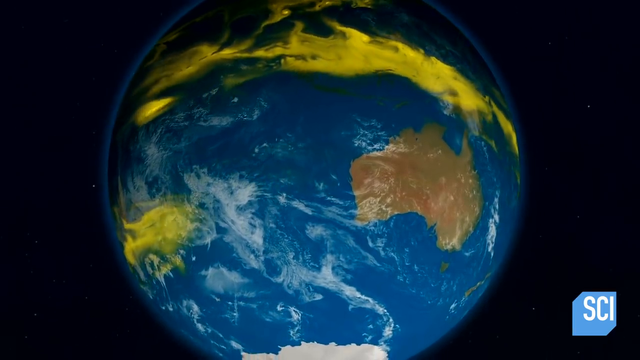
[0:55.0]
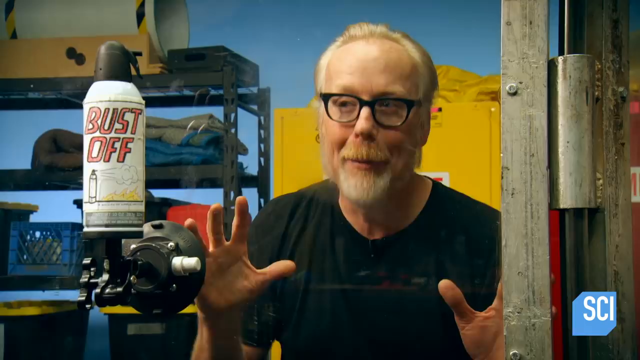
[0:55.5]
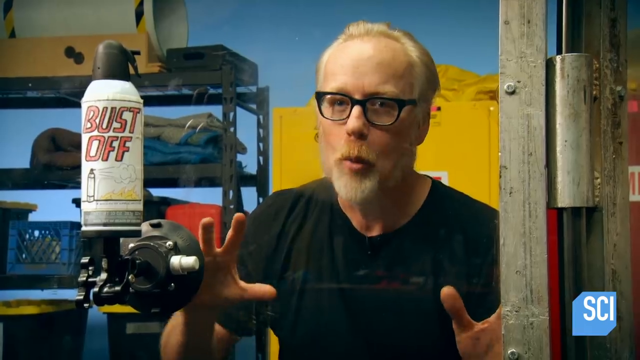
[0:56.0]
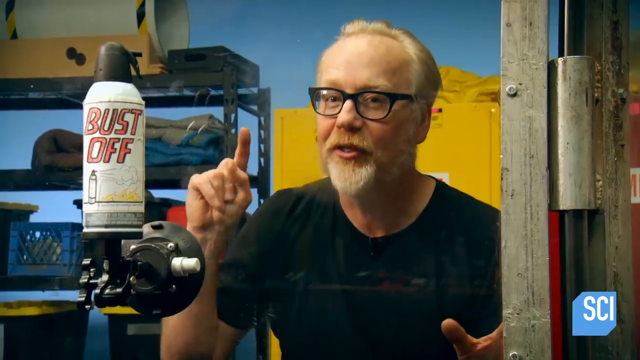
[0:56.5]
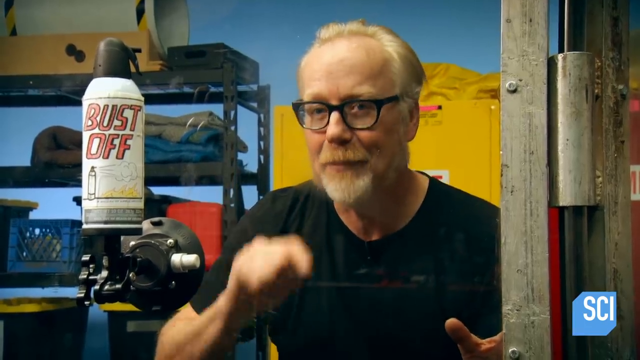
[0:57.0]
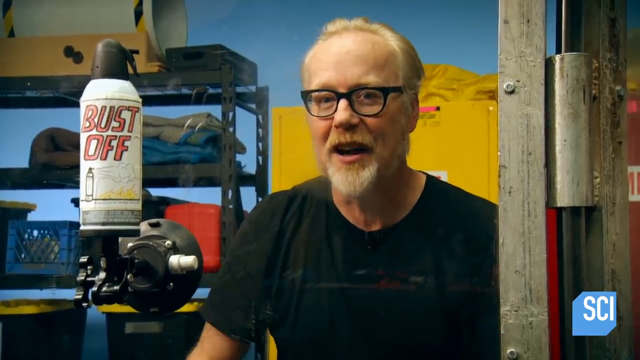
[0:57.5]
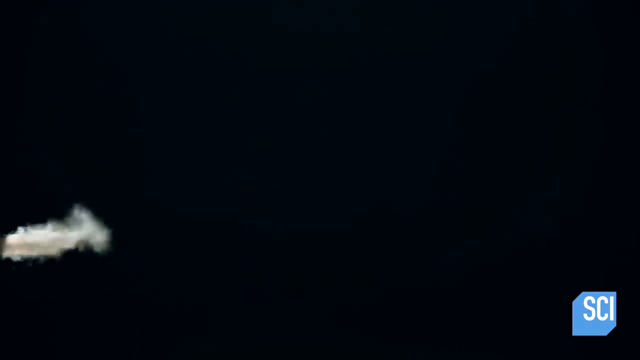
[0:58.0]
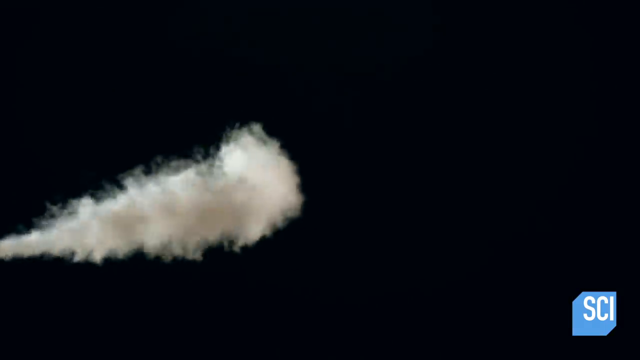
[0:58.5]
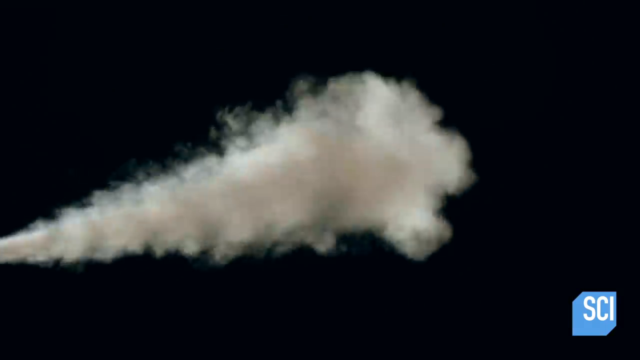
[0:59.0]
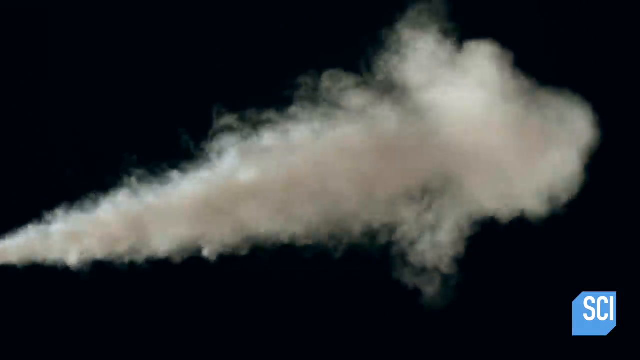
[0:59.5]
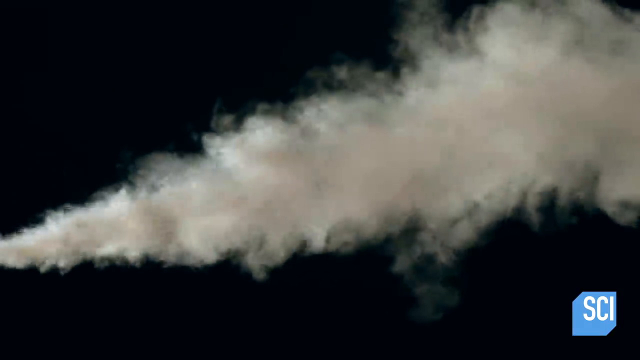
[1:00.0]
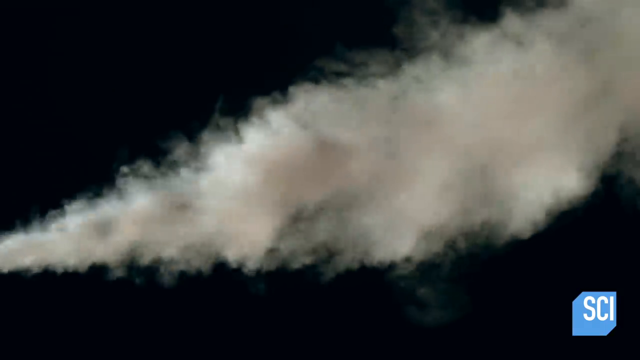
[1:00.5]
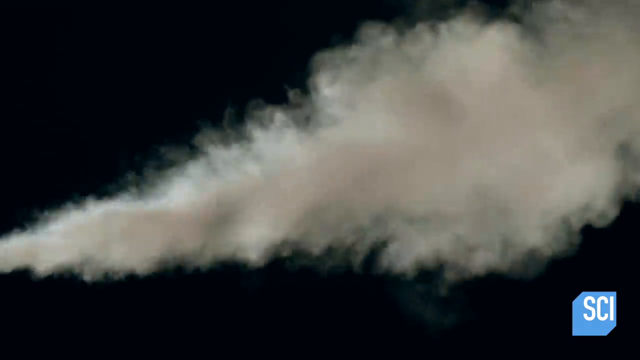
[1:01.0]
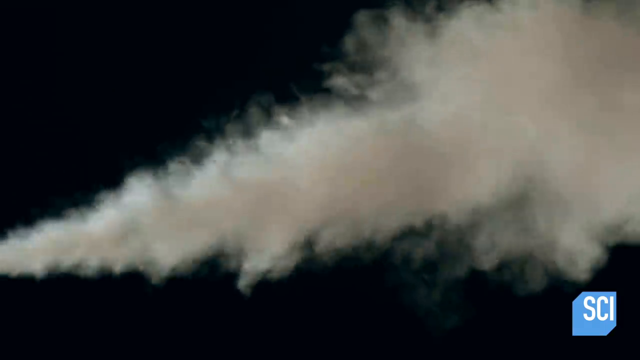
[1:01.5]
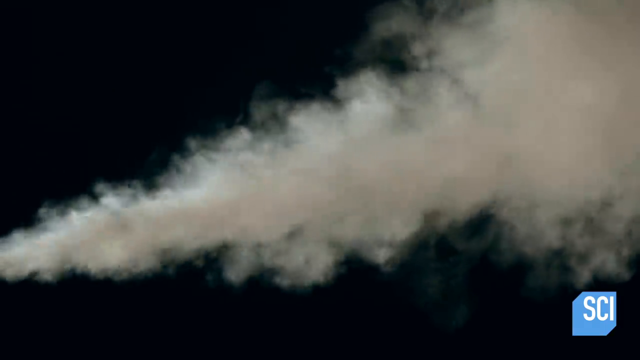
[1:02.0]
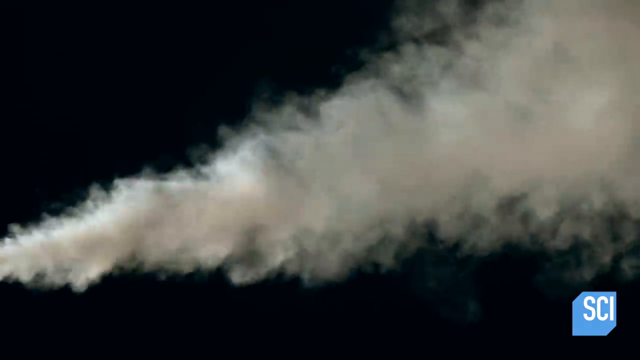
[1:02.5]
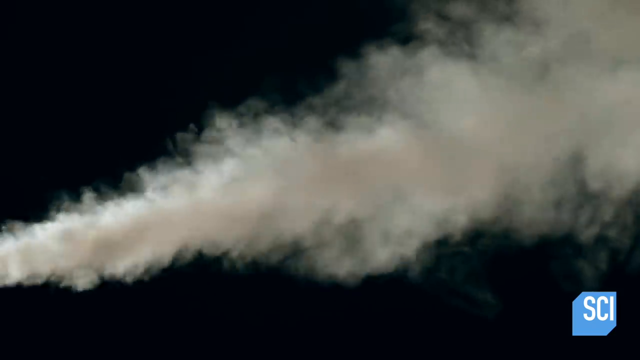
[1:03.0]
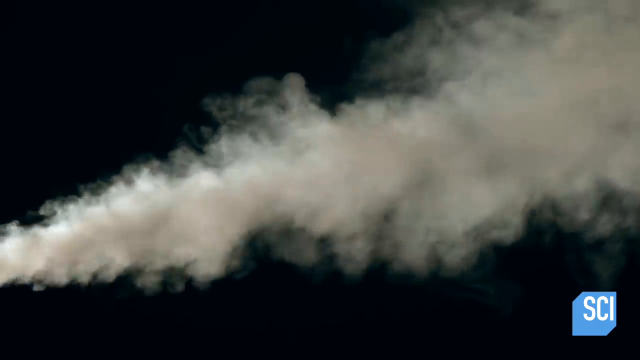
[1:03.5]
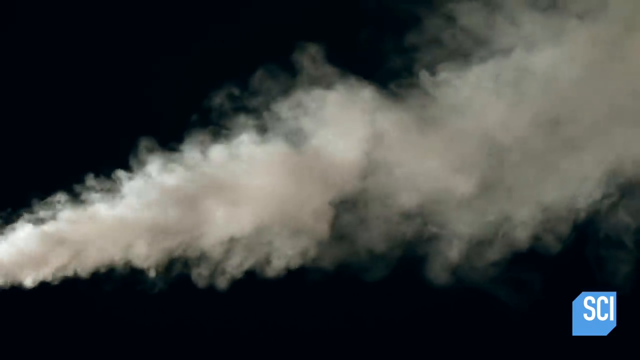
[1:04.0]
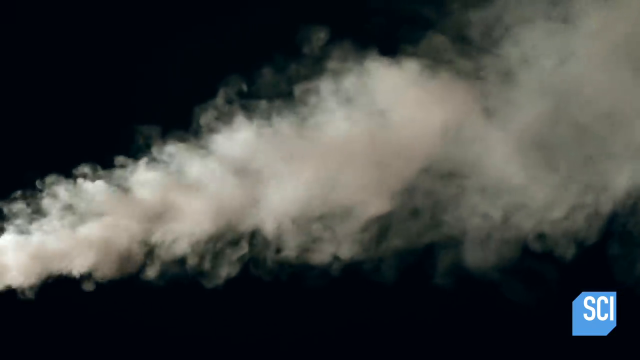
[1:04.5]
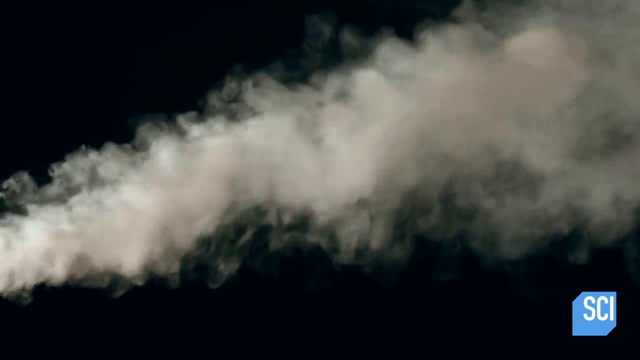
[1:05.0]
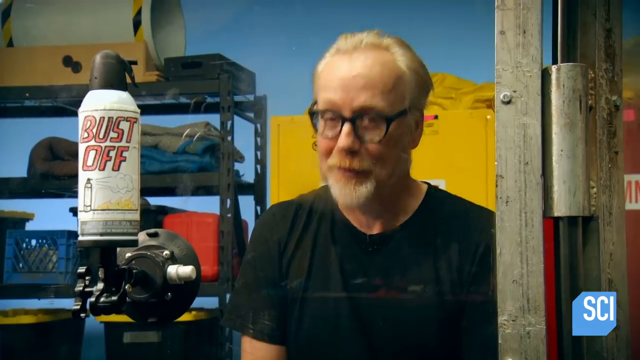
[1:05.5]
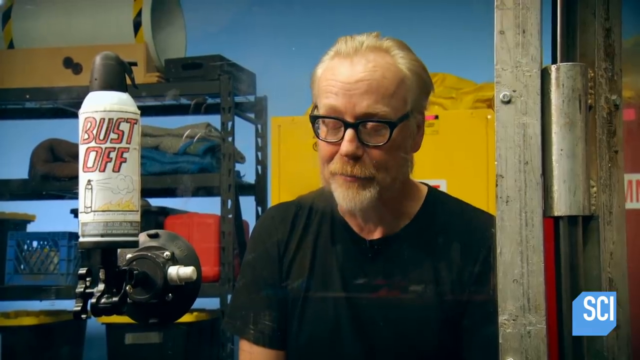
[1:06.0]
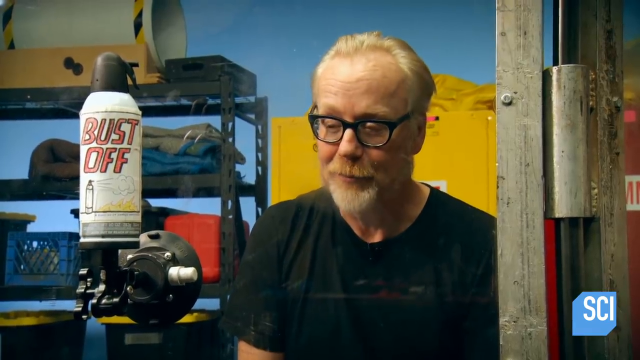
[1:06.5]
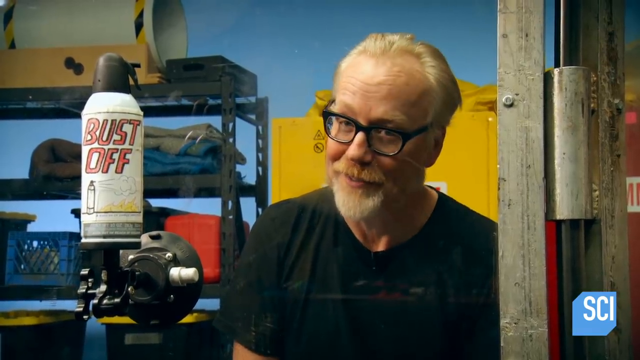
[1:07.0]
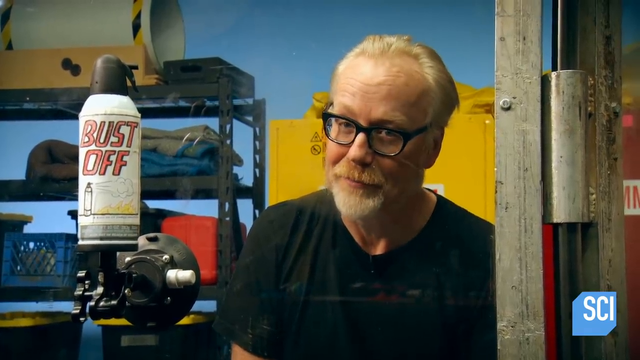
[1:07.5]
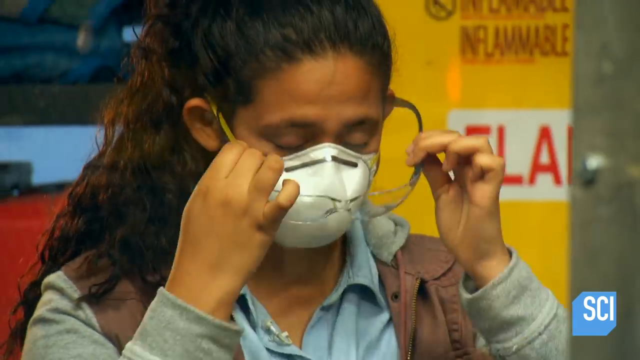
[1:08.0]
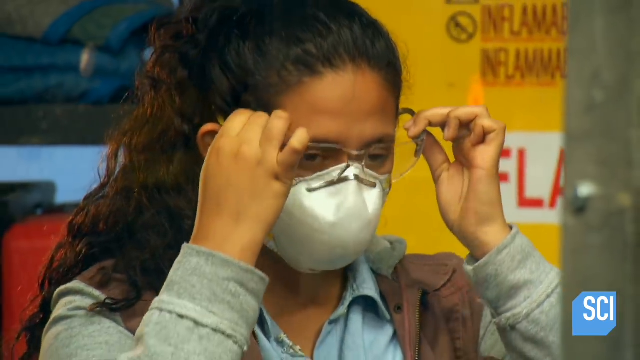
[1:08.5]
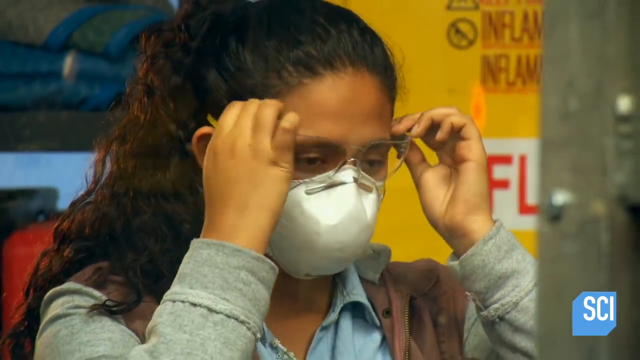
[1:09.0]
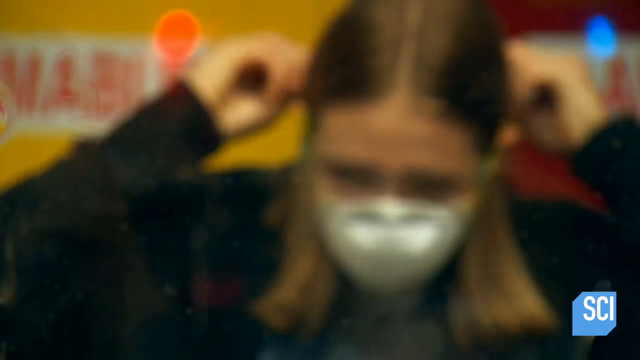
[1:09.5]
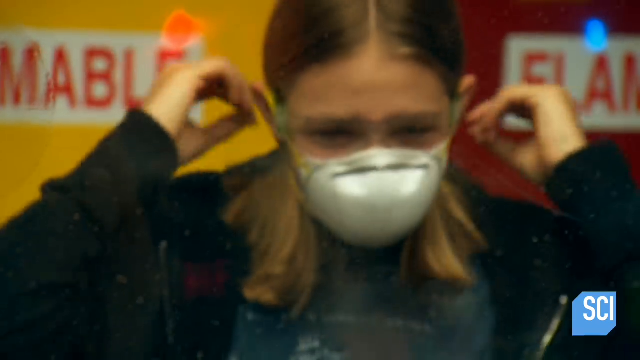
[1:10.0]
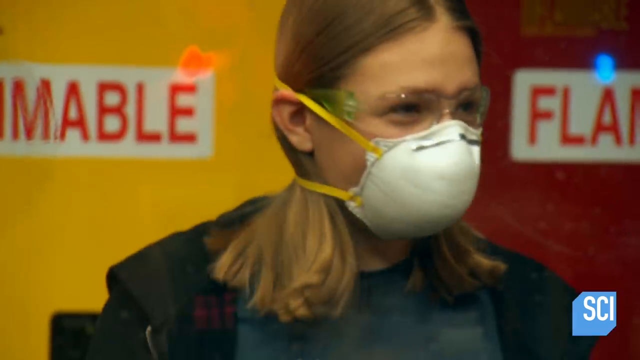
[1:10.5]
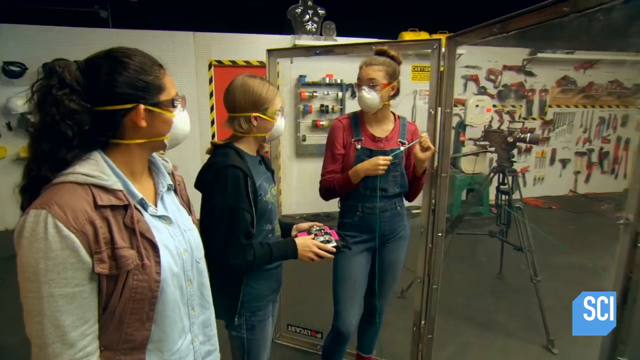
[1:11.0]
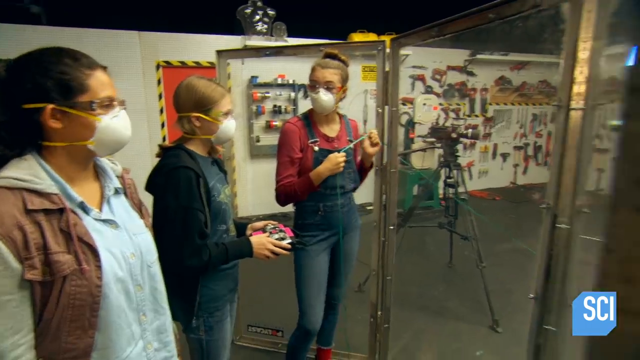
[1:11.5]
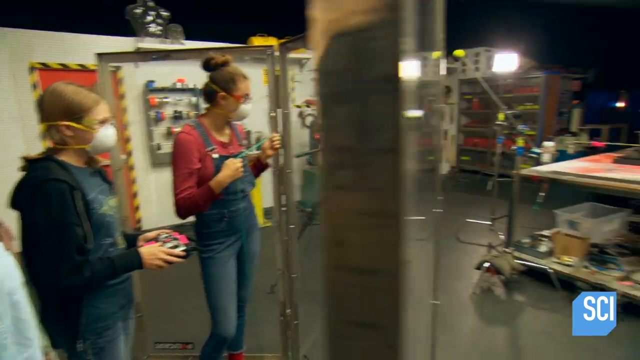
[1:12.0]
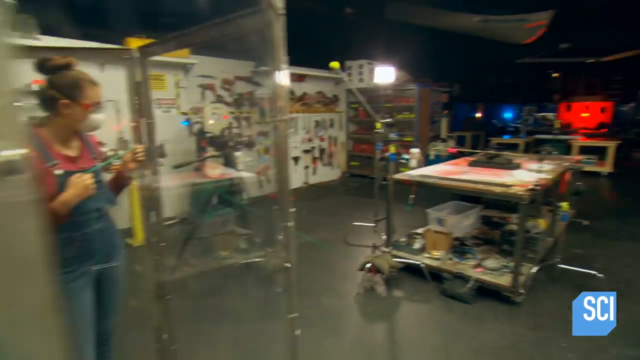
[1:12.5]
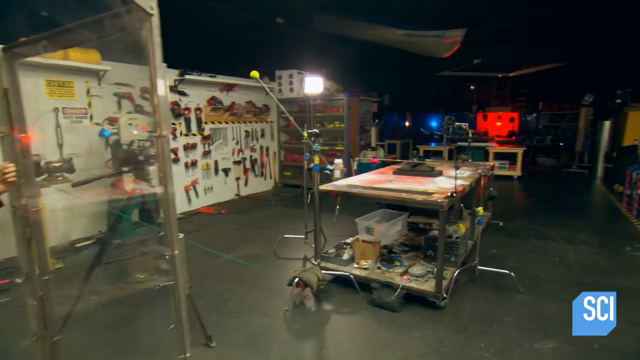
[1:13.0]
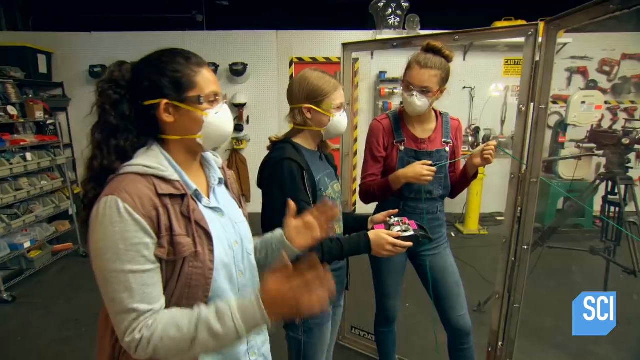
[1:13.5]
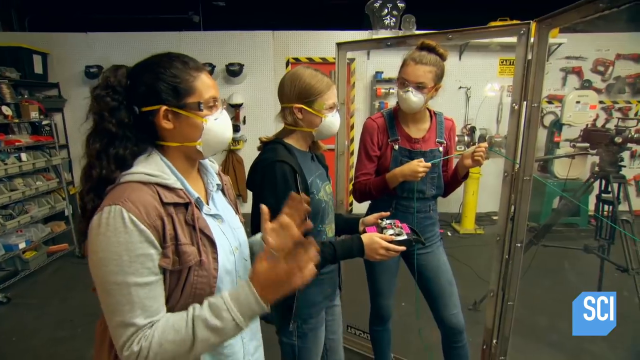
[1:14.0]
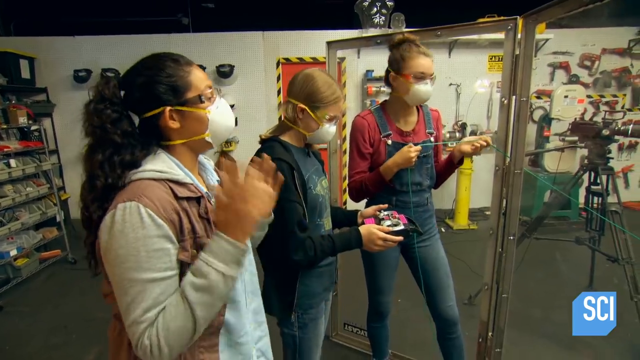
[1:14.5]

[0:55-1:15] A man with gray hair and a gray beard, wearing a black short-sleeve shirt and black glasses, explains Bust-Off in a separate scene. Behind a glass screen, three teenage girls wearing safety gear, masks and goggles watch a demonstration in which compressed air is pushed out. The man stands in some kind of mechanics room. A bottle of Bust-Off with a black top and a white label is shown, and at the end smoke is pushed out, though where it comes from cannot be seen. The girls talk about what they have just witnessed.